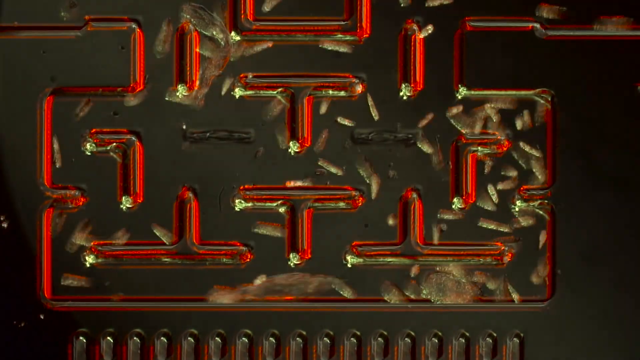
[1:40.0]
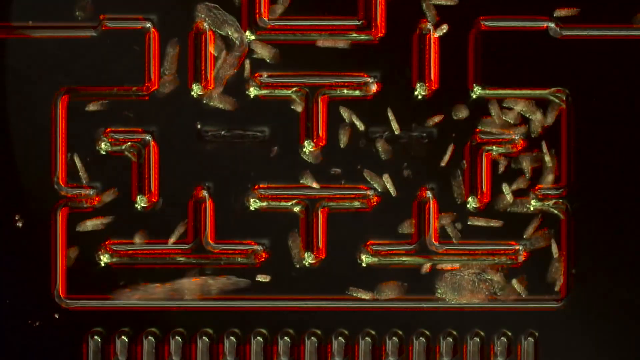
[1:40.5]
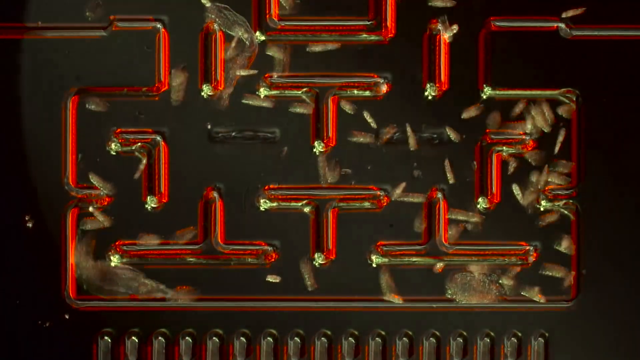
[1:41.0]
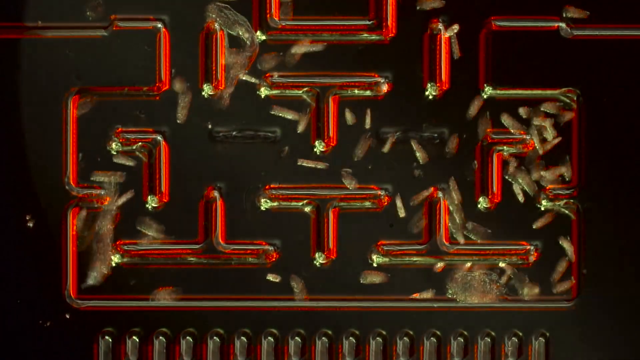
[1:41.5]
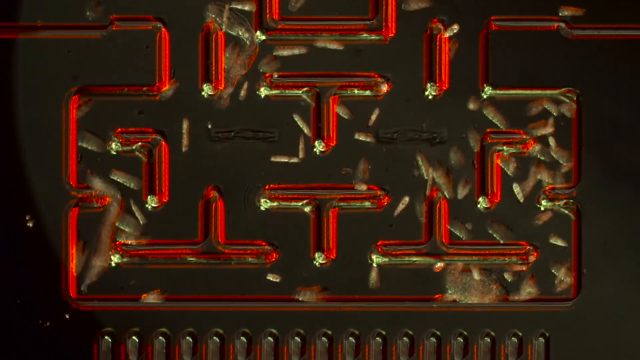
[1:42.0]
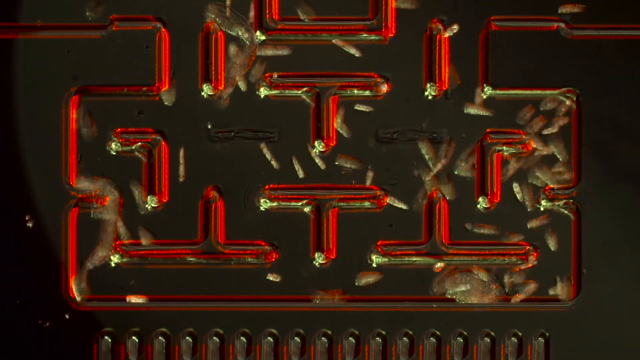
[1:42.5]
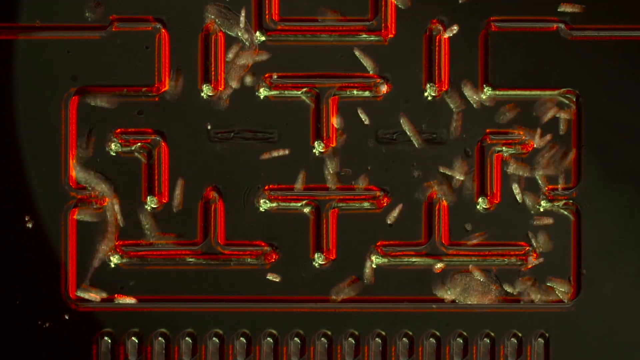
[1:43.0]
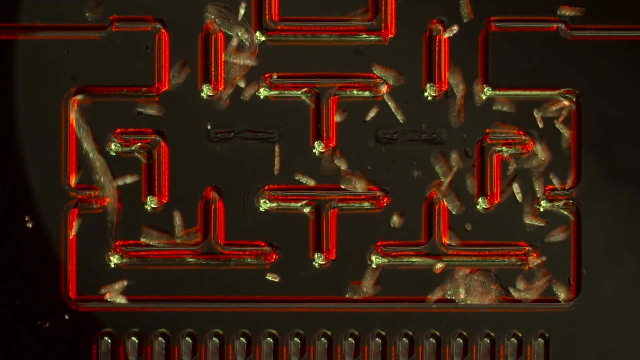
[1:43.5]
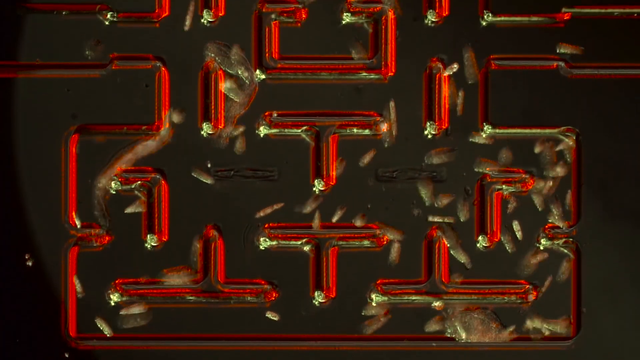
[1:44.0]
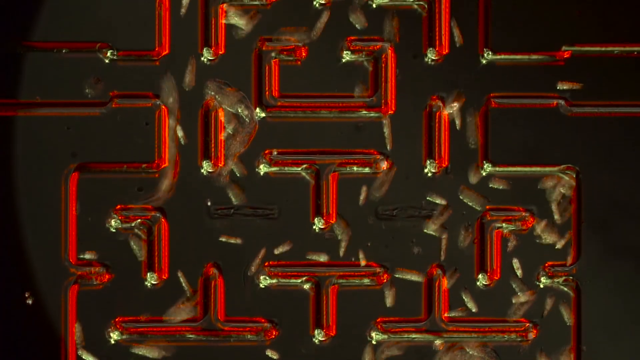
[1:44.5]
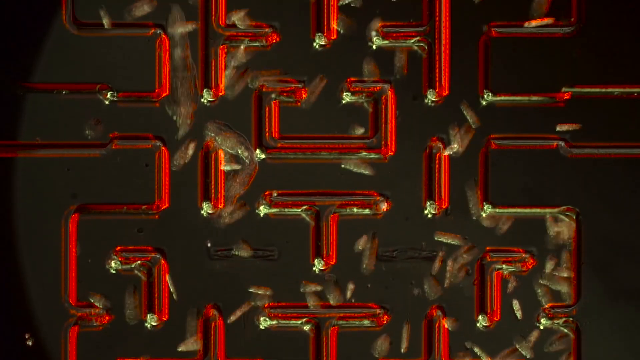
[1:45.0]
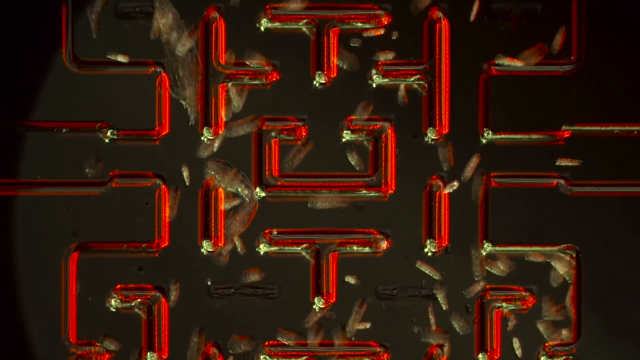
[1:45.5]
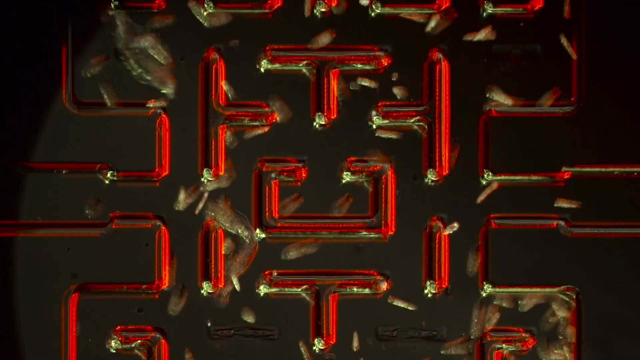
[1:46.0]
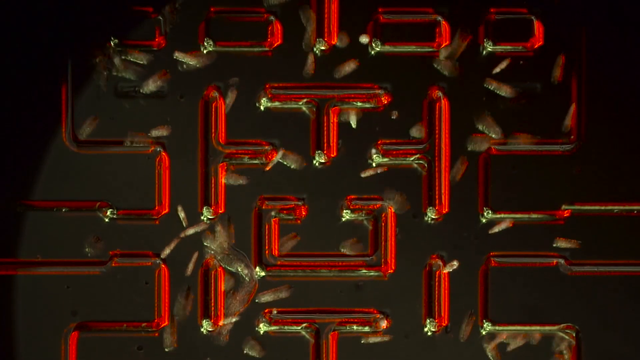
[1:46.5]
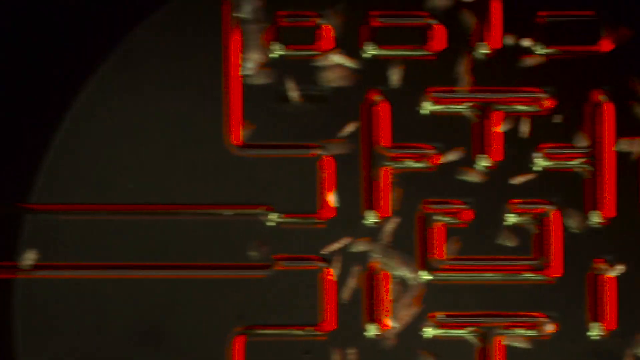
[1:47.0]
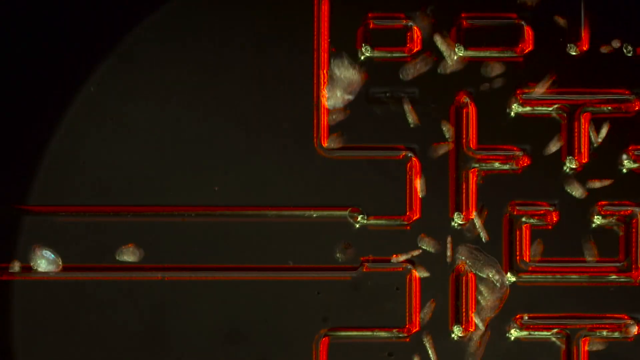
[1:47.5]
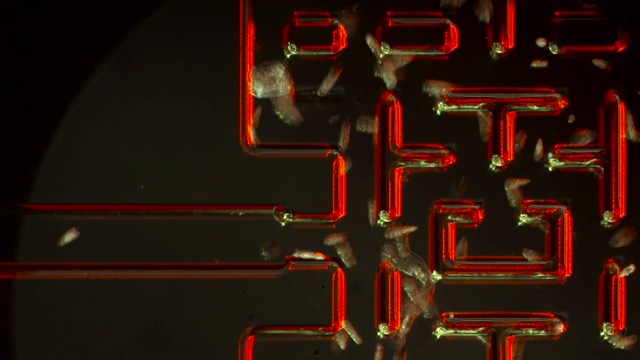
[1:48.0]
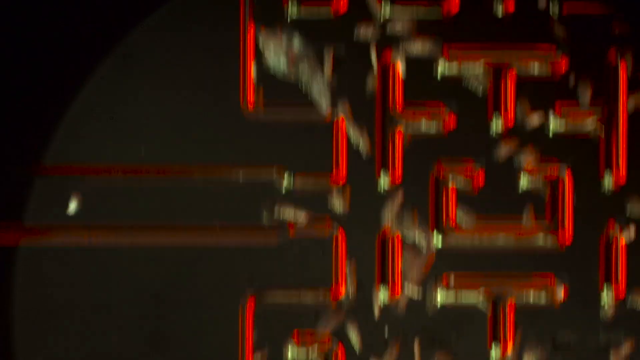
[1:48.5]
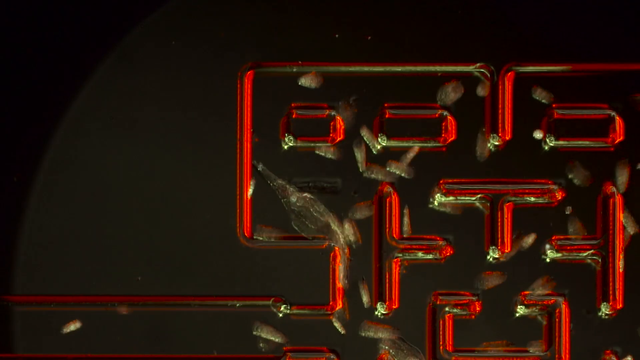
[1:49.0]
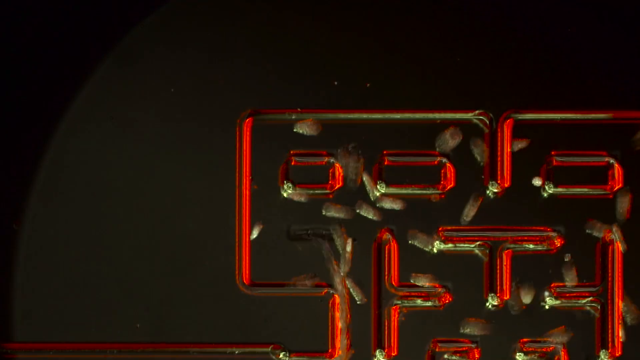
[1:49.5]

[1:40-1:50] Creatures move around the red maze, whose background seems to be gradually strobing from black to somewhat lit. The large creature travels along the bottom side of the maze to the far left wall, goes up along the wall, around the corner to the right, and then up the left corridor. It goes past the long corridor and continues navigating to the left side, sticking close to the wall. The camera seems to be zooming in and following its movements. The creature briefly doubles back and then starts going down again.